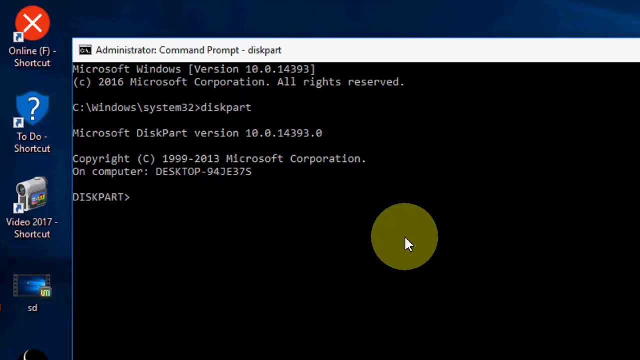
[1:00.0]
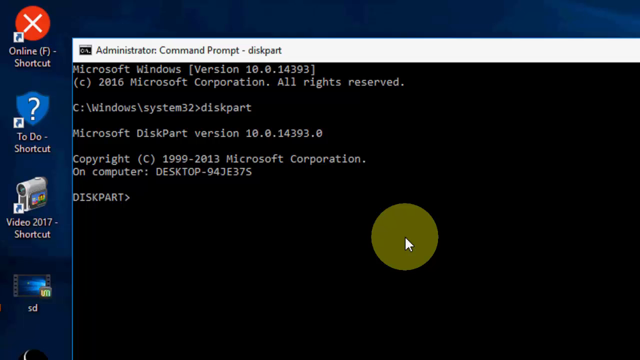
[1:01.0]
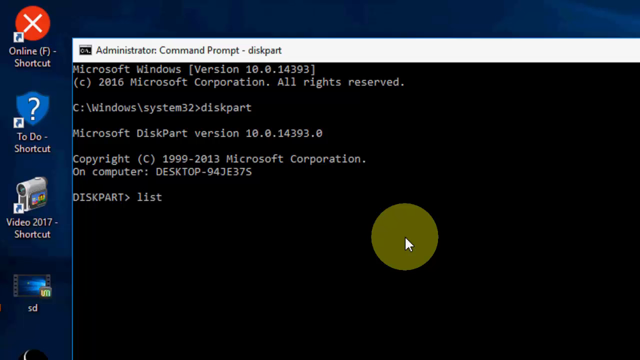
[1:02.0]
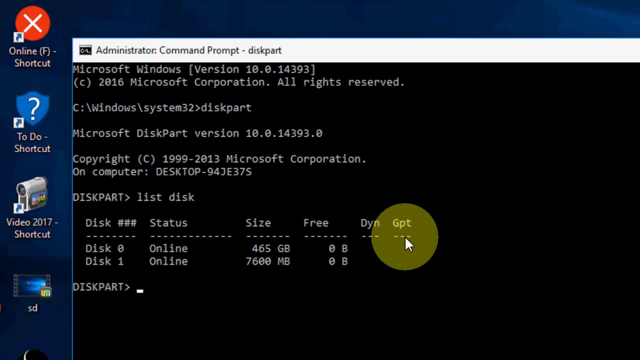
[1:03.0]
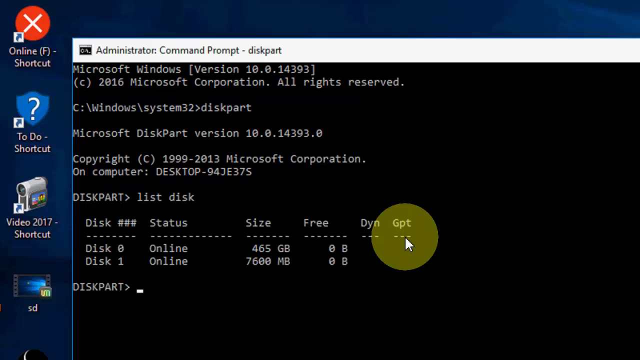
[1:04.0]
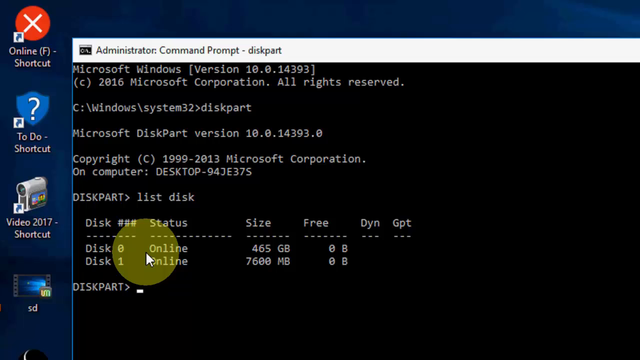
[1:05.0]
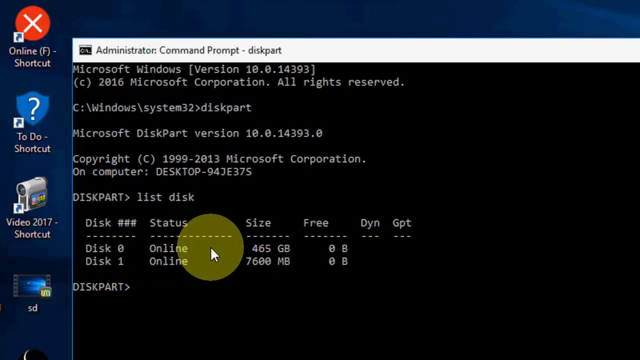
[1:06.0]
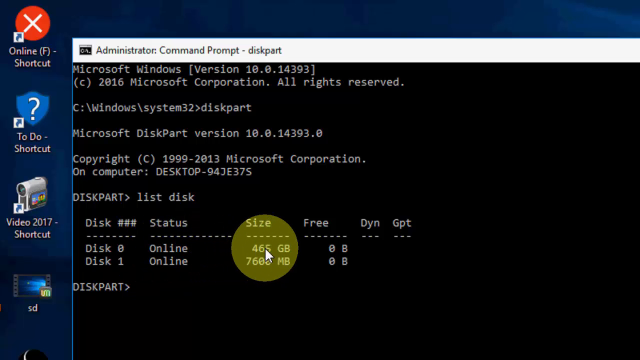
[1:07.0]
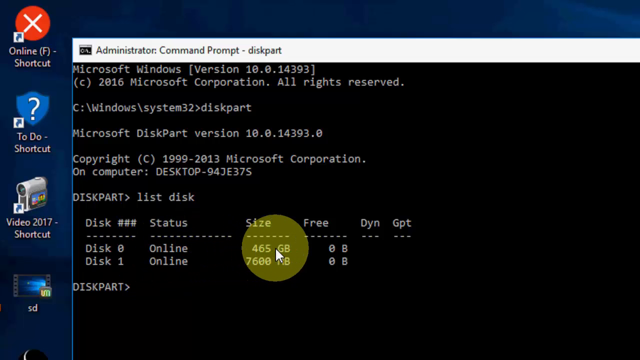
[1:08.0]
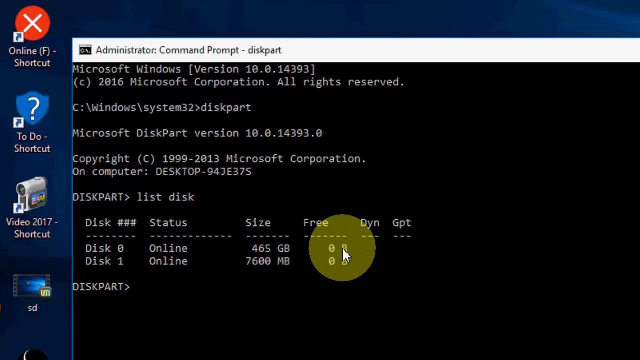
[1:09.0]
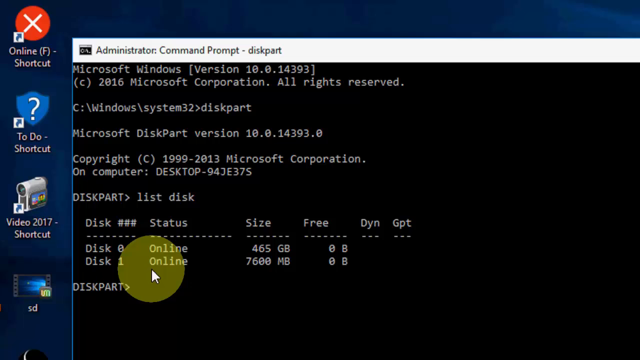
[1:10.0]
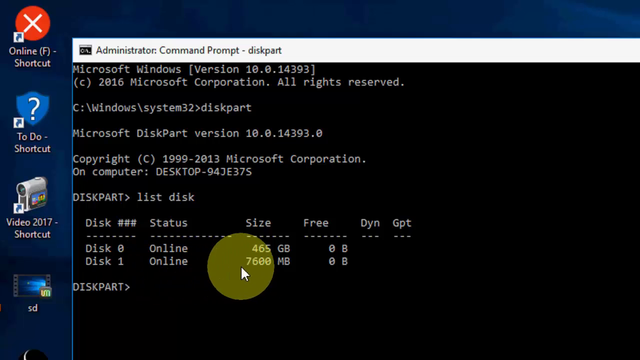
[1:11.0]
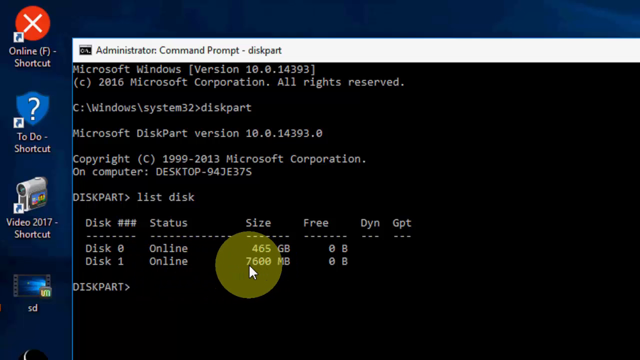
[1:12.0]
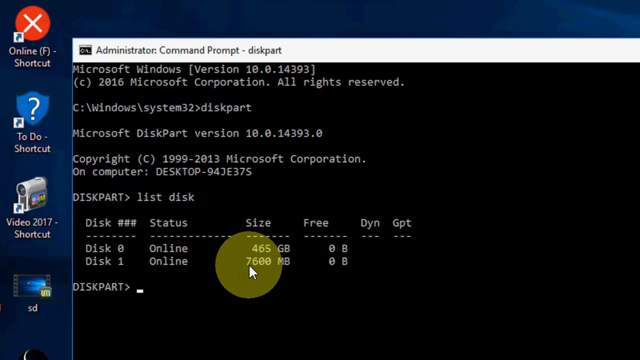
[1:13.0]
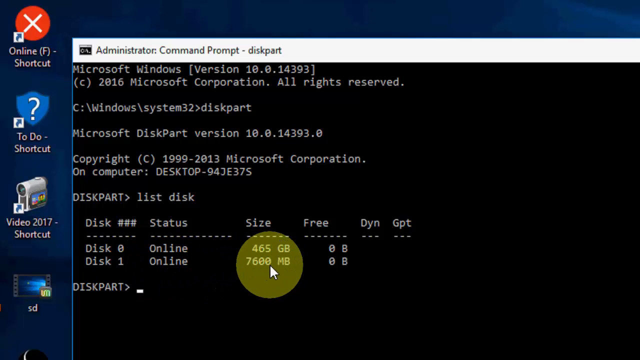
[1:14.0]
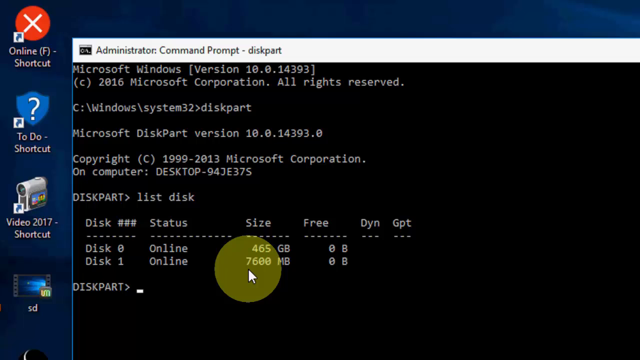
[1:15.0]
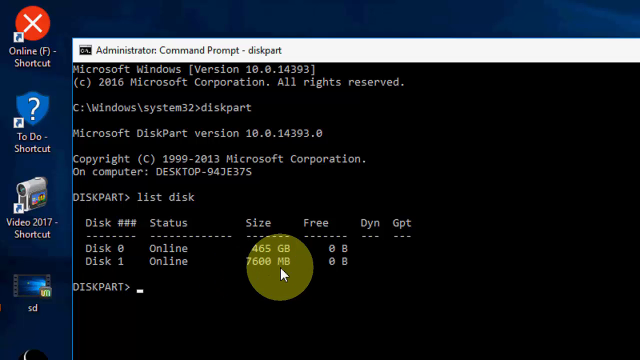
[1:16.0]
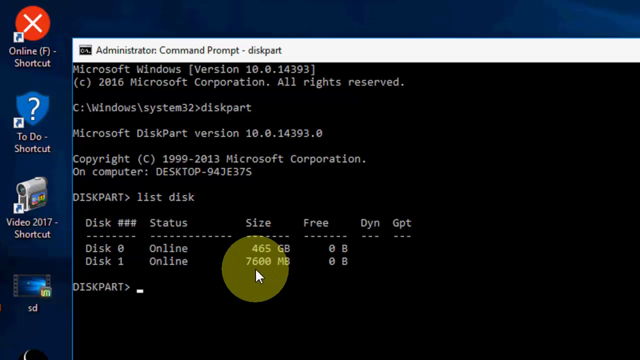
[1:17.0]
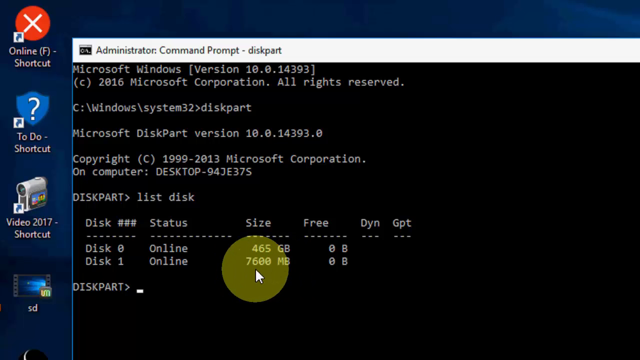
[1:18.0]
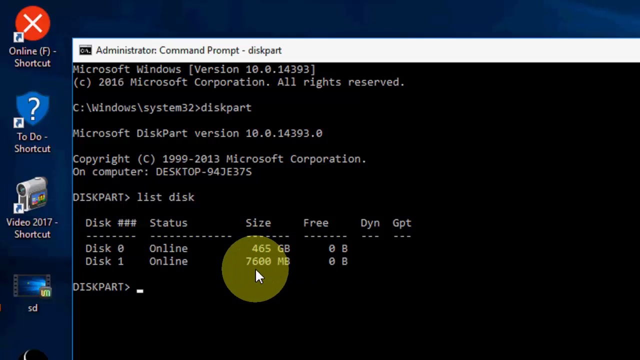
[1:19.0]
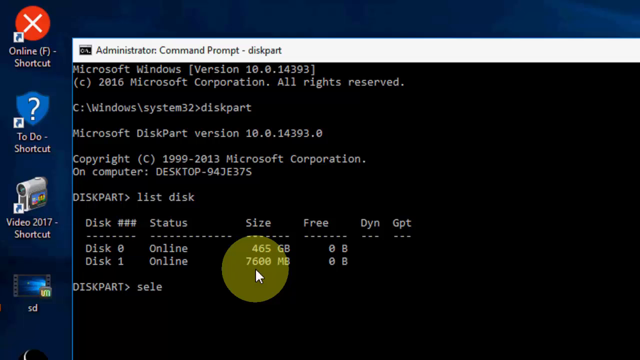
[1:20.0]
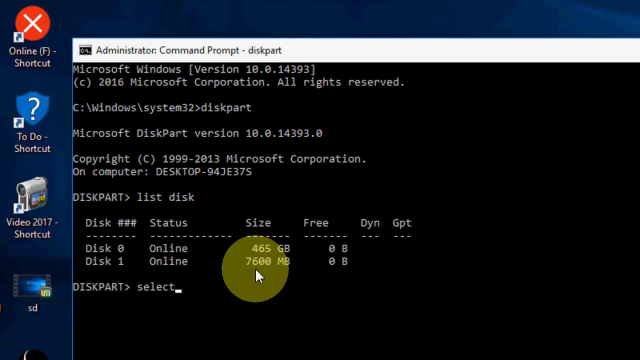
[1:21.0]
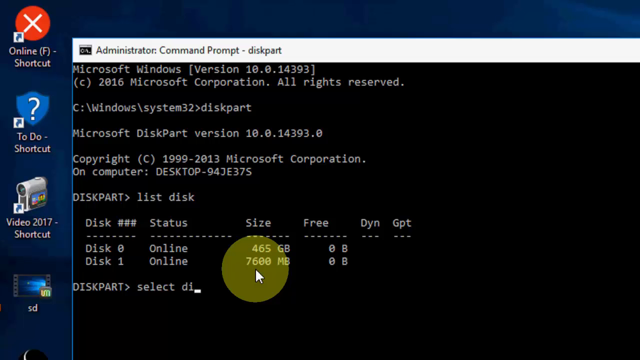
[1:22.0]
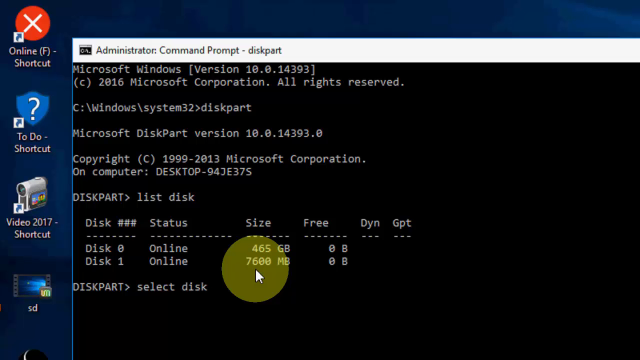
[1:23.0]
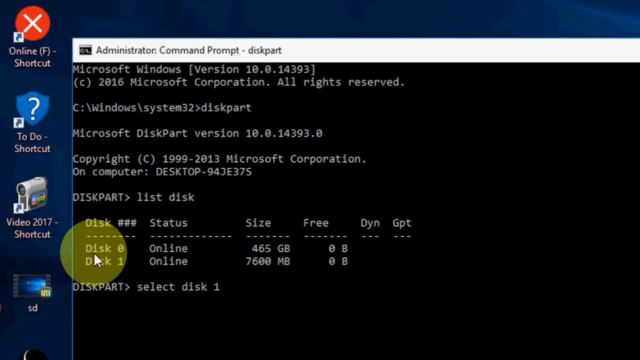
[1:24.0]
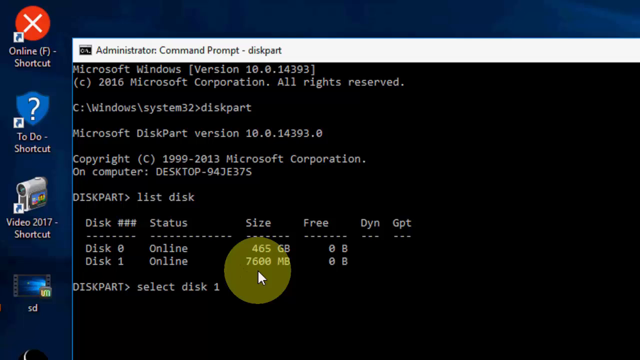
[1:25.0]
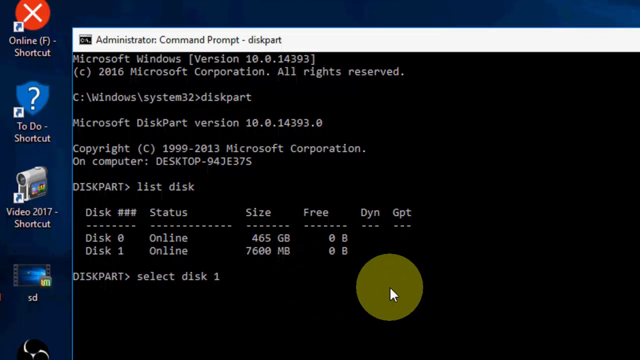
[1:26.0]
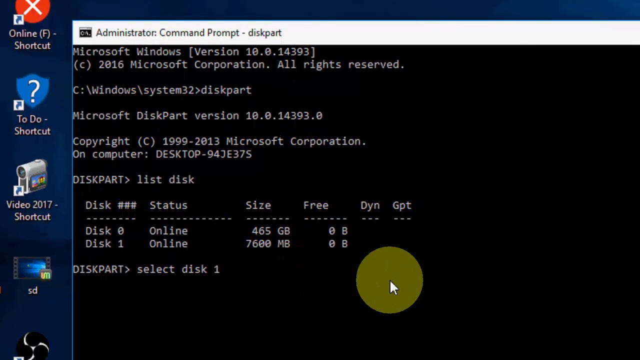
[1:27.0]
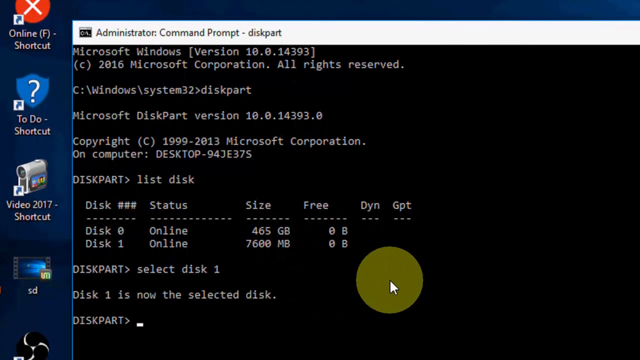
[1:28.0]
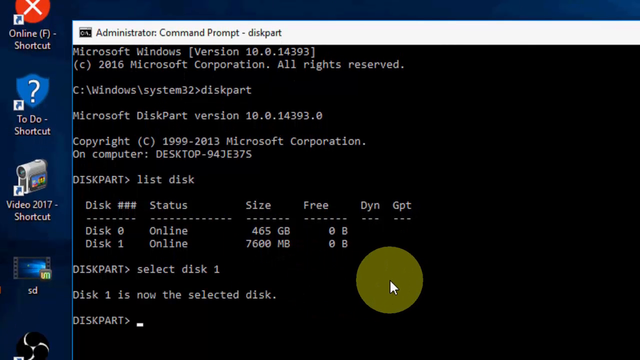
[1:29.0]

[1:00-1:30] The administrator command prompt is open, showing "Microsoft Windows version 10.0.14393", "2016 Microsoft Corporation. All rights reserved.", DiskPart version 10.0.14393.0, copyright 1999-2013 Microsoft Corporation, on computer desktop 94je37s. The person types "list disk", and a chart of the disks appears below with columns for disk number, status, size, free and GPT. Disk 0 is online with 465 gigabytes and 0 bytes free; Disk 1 is online with 7600 megabytes and 0 bytes free. The person hovers over this information while reading it, lingering over the 7600 megabytes for some time, while DiskPart waits for the next command. They type "select disk 1", and it reads "Disk 1 is now the selected disk". The DiskPart prompt appears at the bottom again, waiting for the next command. On the left side of the screen is a "Video 2017" shortcut application.